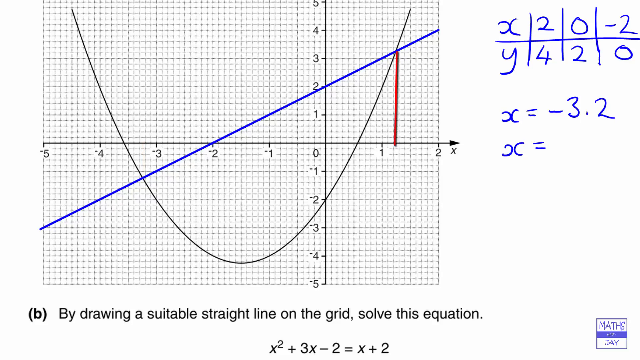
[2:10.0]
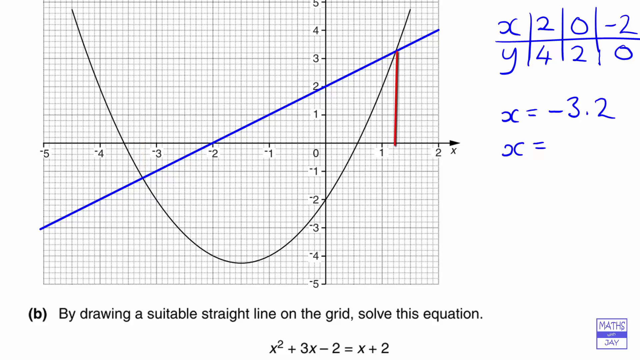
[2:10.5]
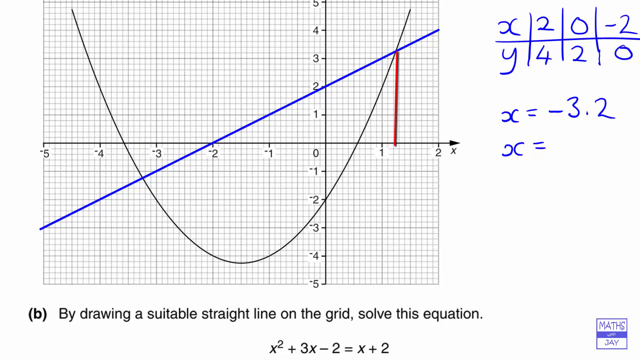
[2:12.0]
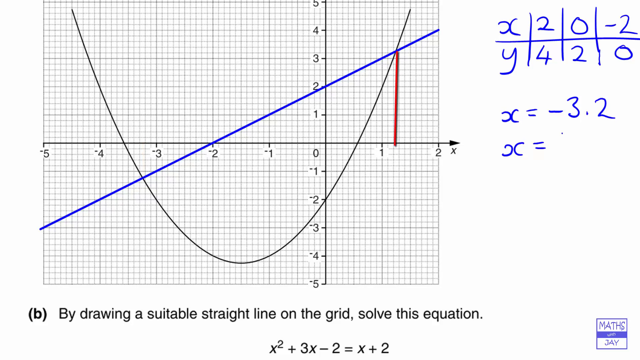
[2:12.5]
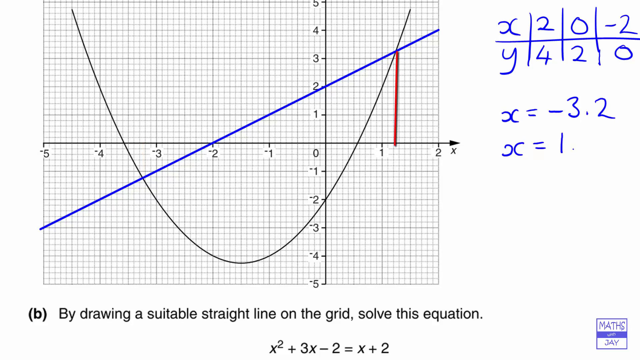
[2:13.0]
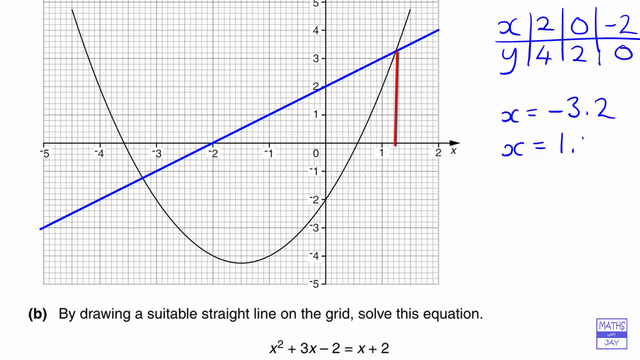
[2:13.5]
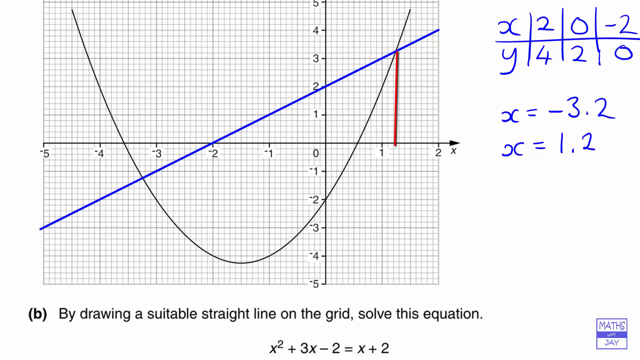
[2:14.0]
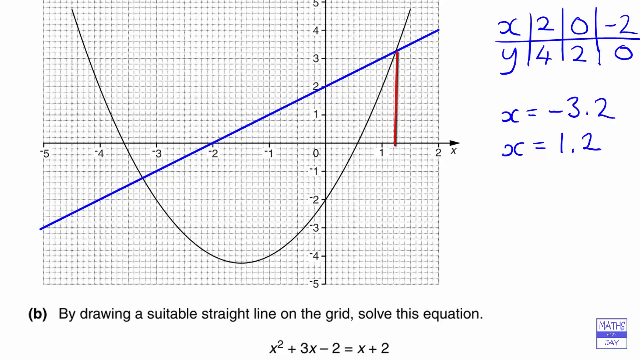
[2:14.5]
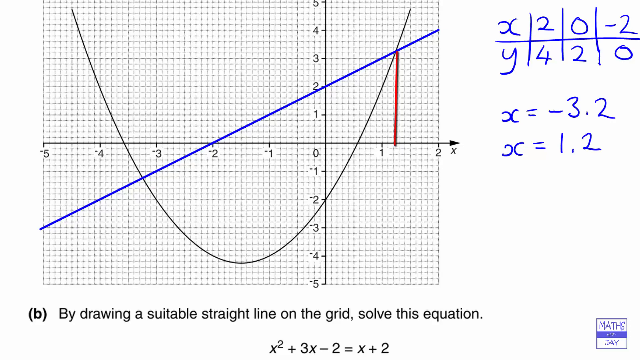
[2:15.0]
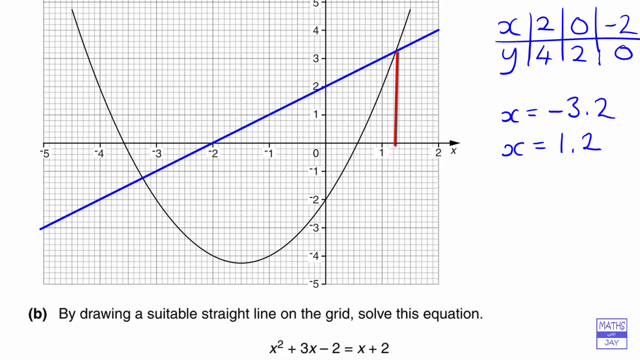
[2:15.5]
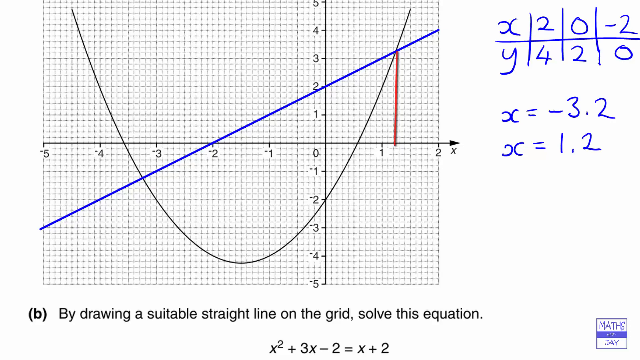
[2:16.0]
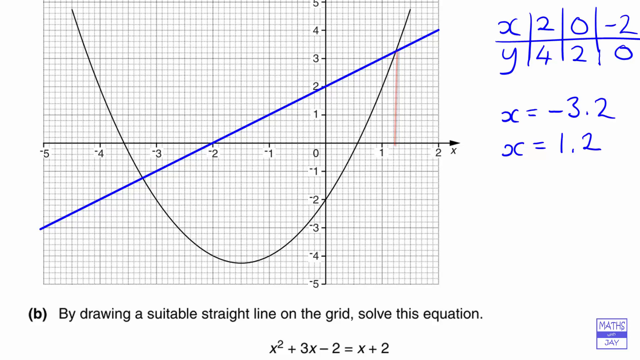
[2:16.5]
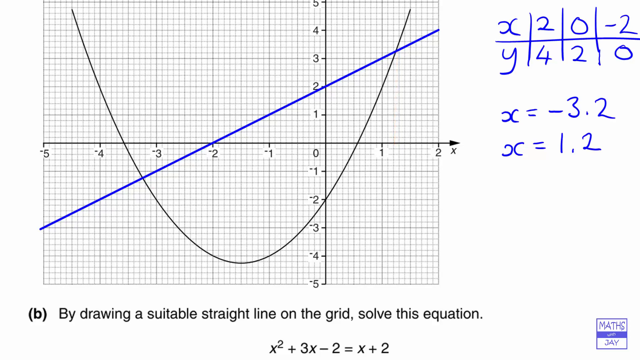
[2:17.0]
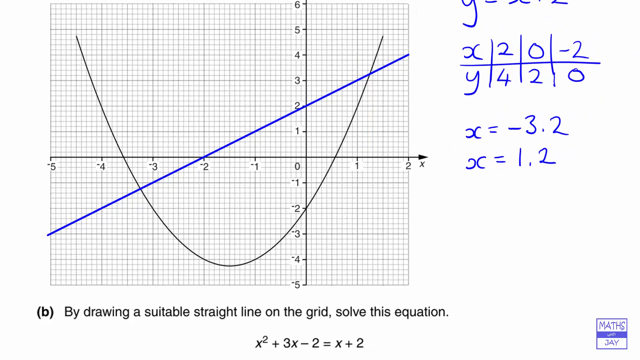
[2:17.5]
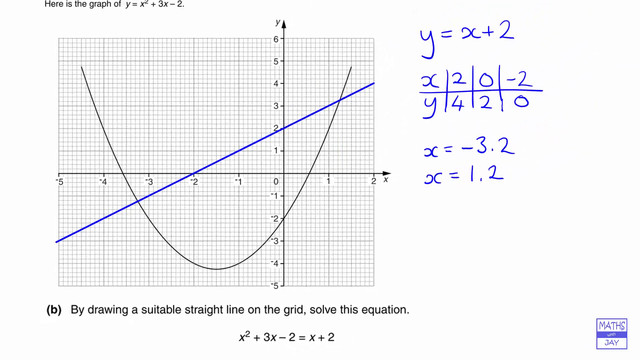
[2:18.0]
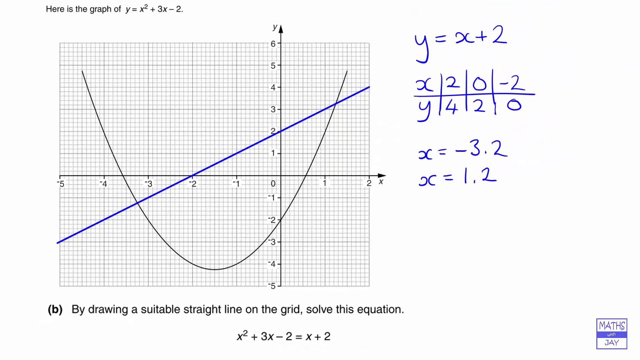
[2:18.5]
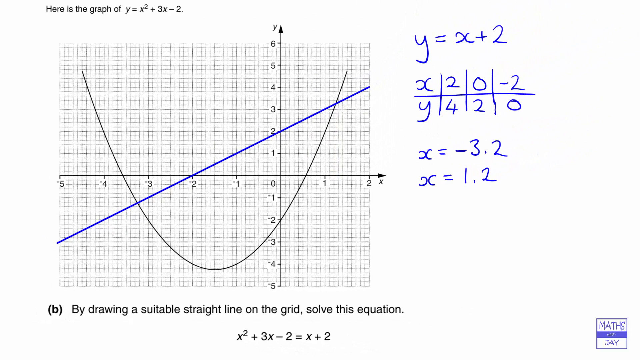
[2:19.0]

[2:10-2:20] In the right corner, x = −3.2 and x = 1.2 are written. The video zooms out. Another straight line is drawn from the circled joining point down to the horizontal line on the graph.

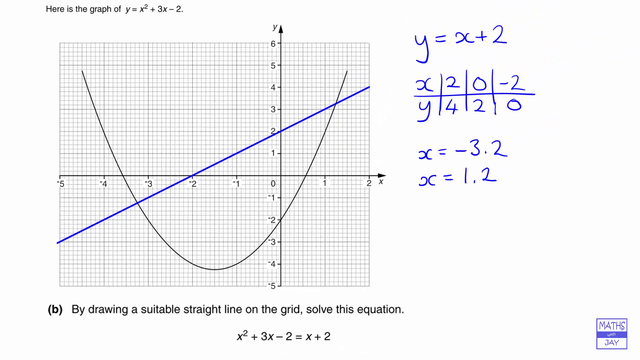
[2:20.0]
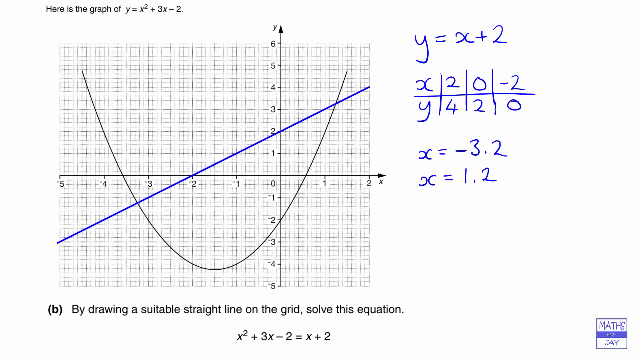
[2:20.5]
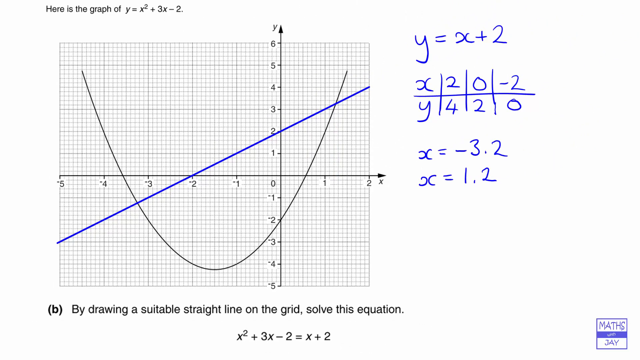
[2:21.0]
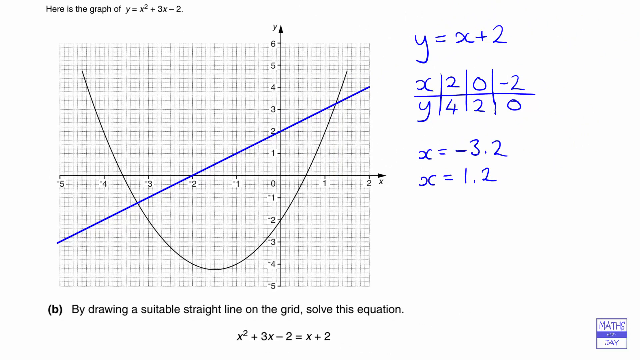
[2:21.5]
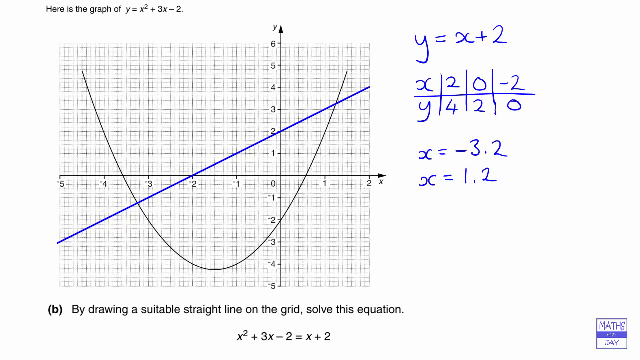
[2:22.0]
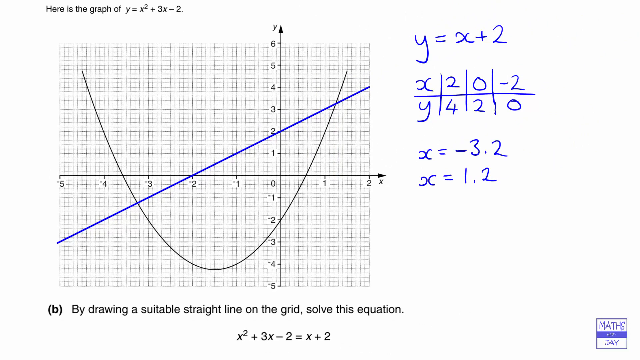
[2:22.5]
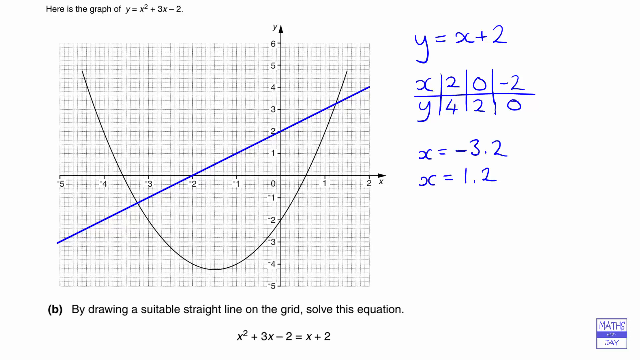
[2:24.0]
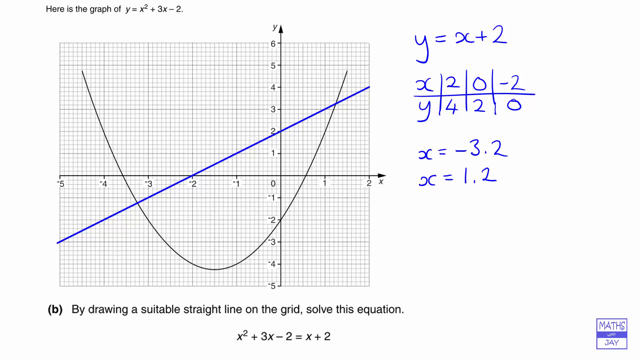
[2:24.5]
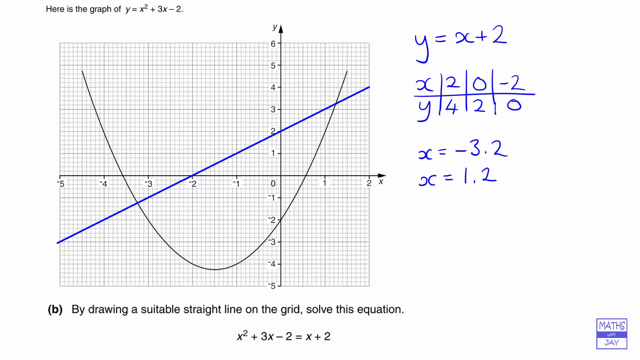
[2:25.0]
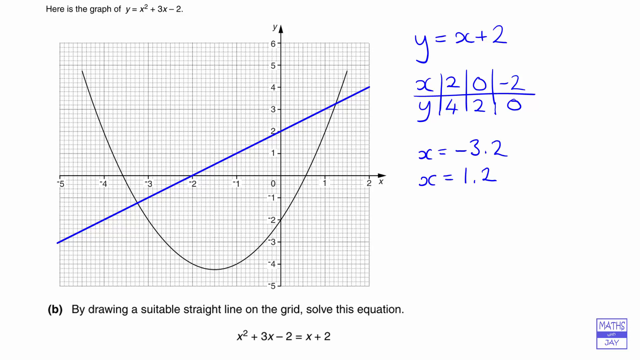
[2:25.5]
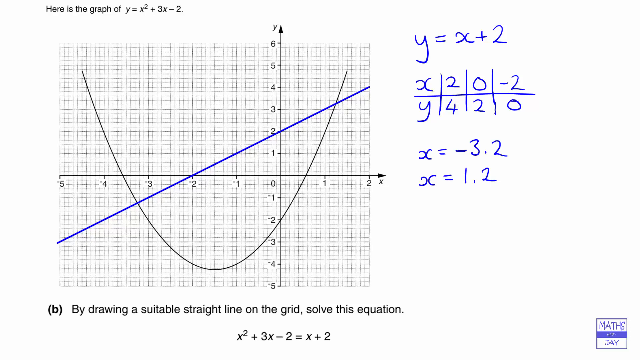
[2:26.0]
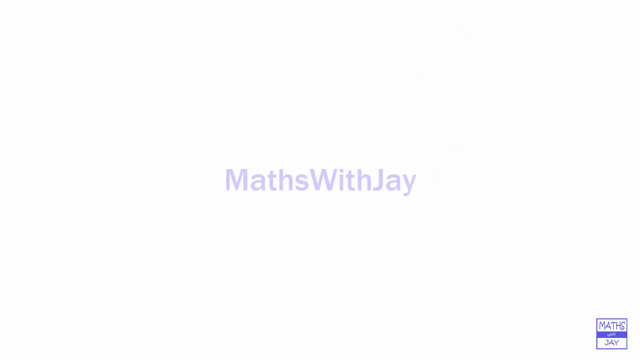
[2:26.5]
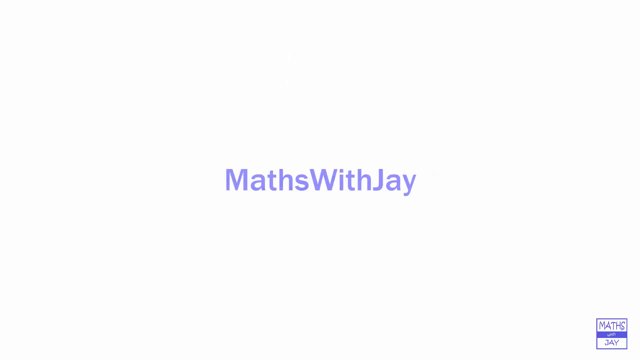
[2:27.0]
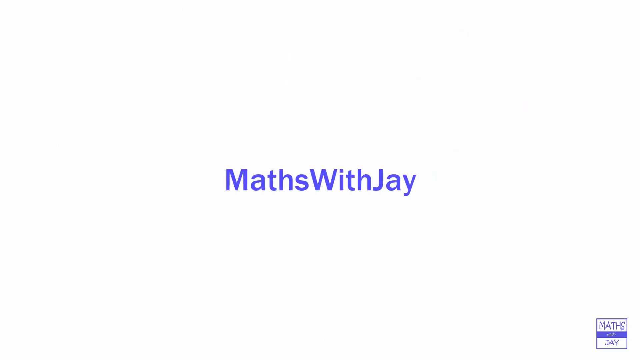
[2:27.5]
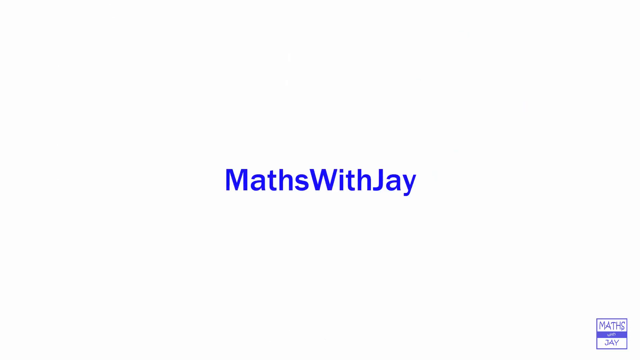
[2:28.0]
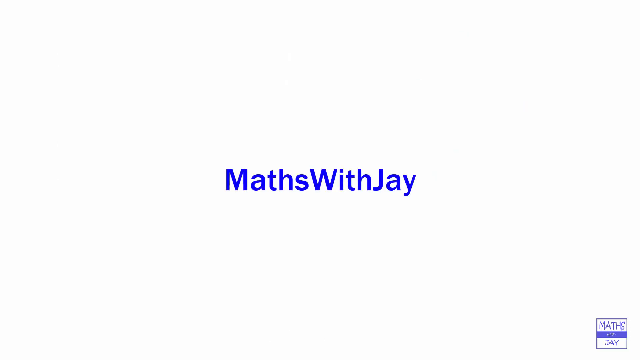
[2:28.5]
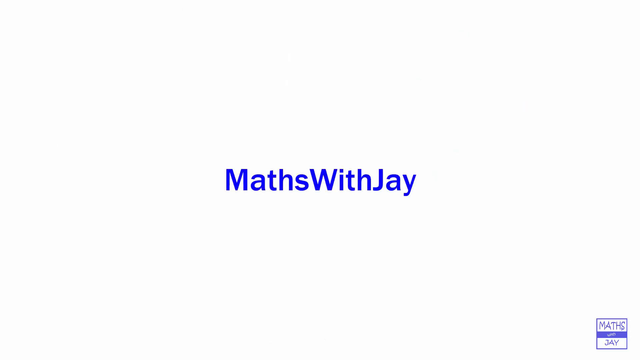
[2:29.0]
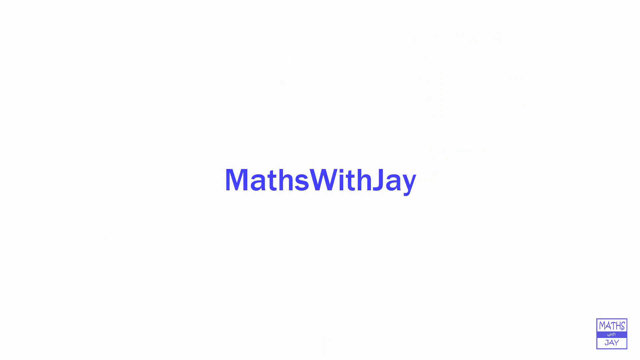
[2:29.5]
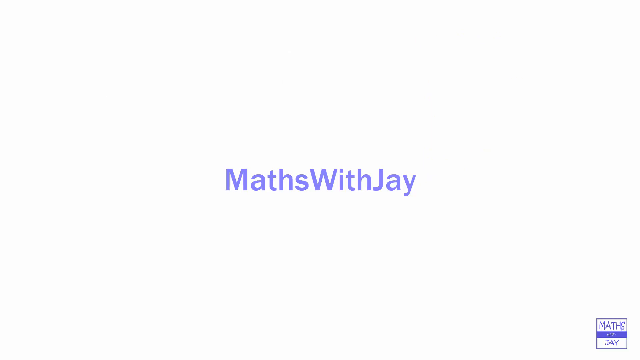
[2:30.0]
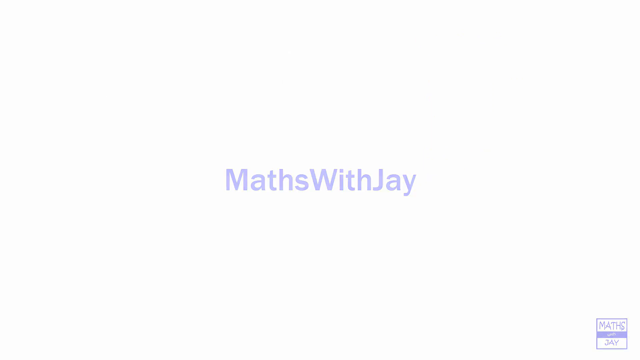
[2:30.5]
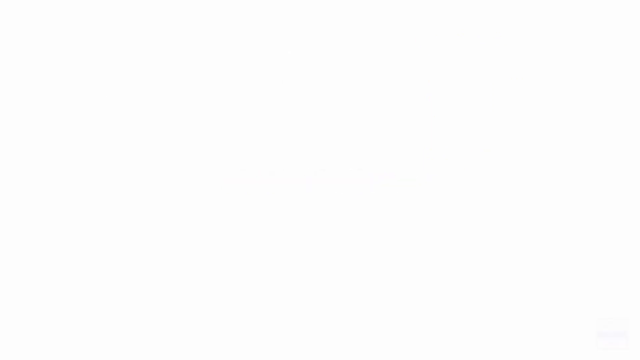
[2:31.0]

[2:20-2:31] The equations x = −3.2 and x = 1.2 are written. A red line is drawn from the point where the lines crossed to a point on the graph. The video shows "math with J", with J as the author. The video appears to come to an end, apparently with the equation solved.